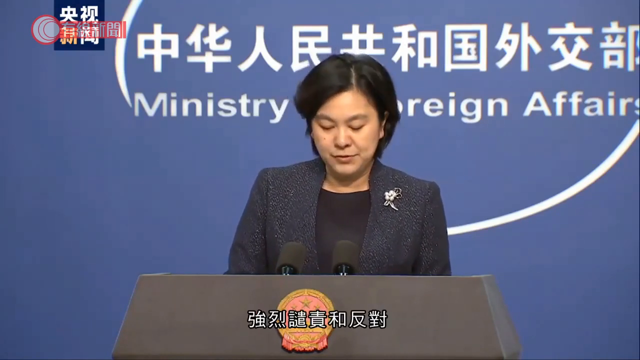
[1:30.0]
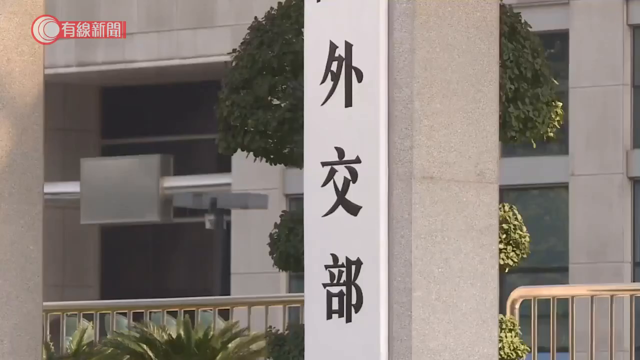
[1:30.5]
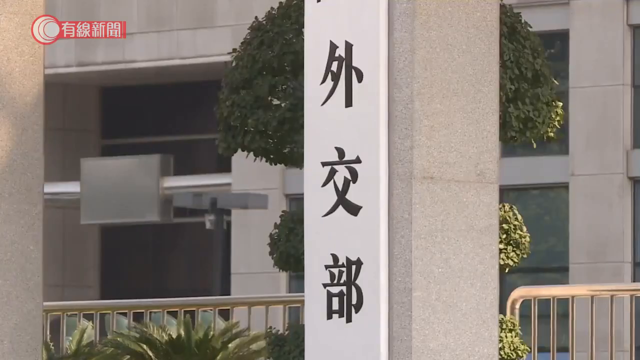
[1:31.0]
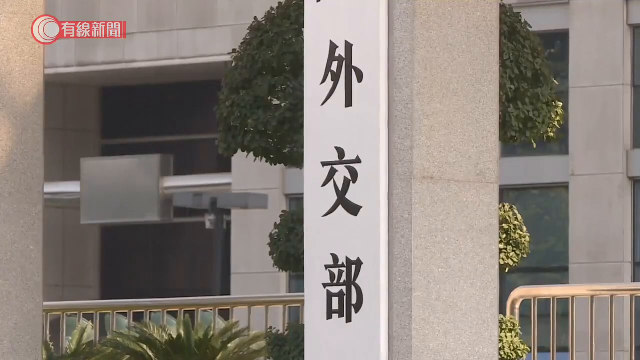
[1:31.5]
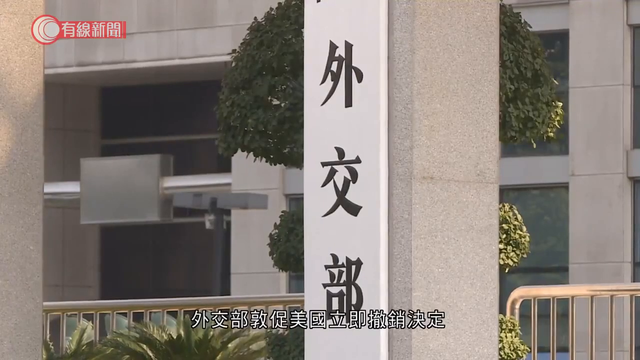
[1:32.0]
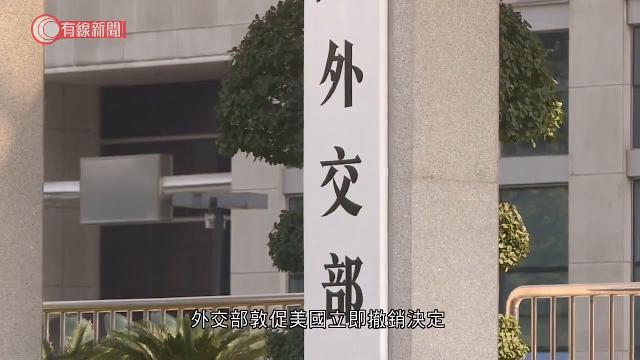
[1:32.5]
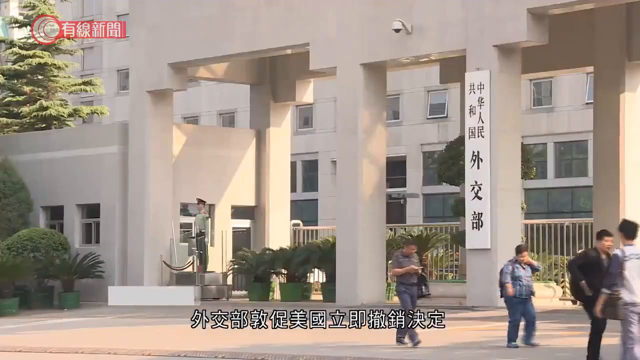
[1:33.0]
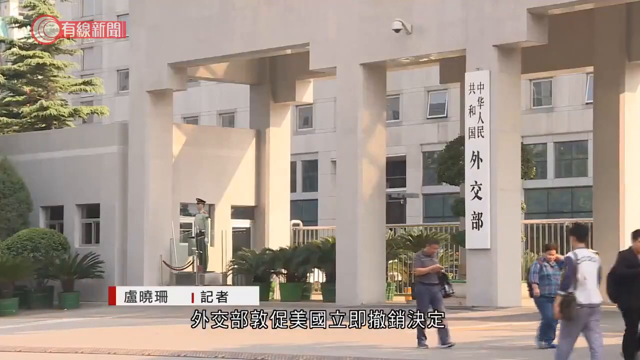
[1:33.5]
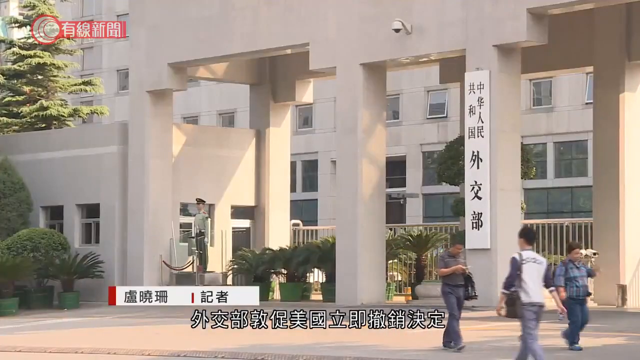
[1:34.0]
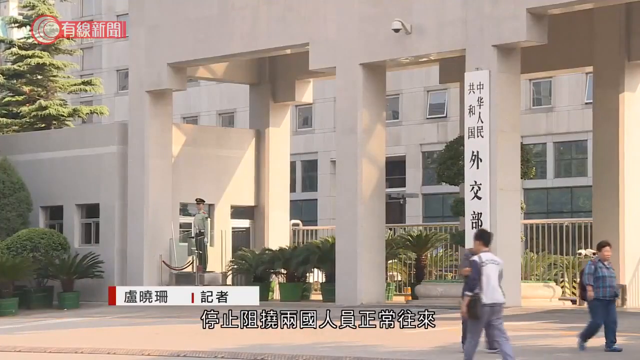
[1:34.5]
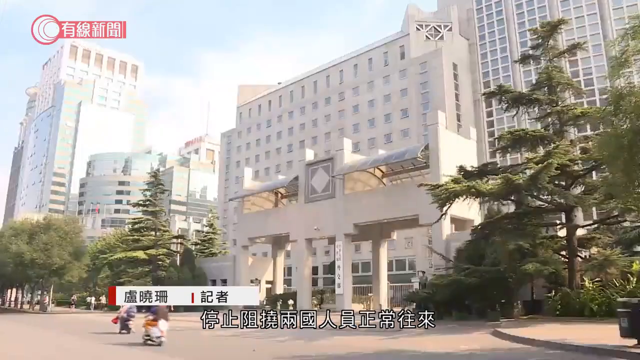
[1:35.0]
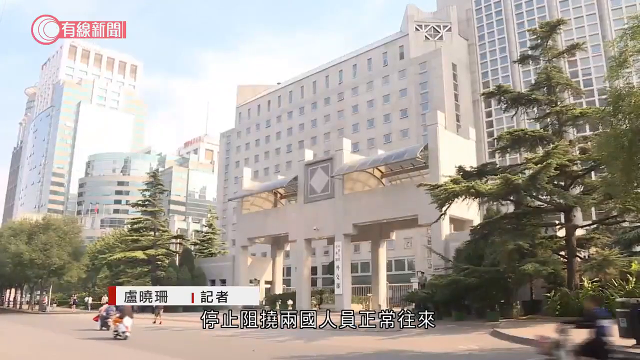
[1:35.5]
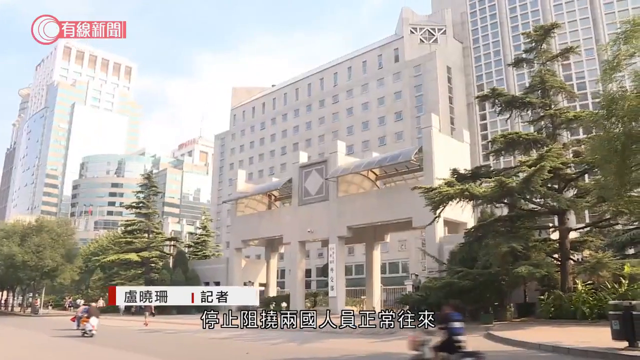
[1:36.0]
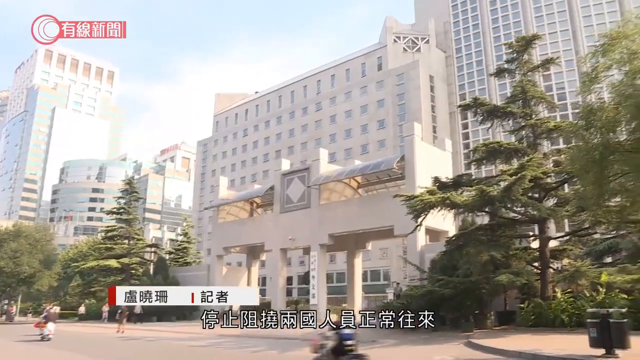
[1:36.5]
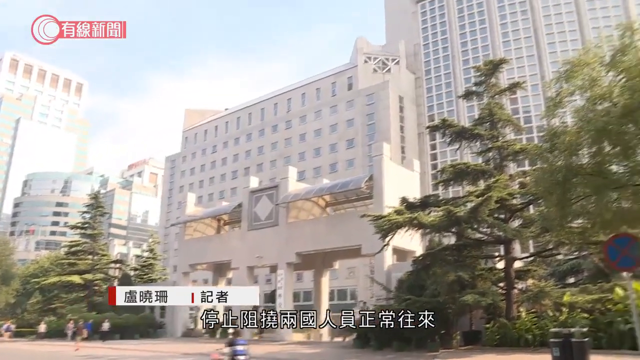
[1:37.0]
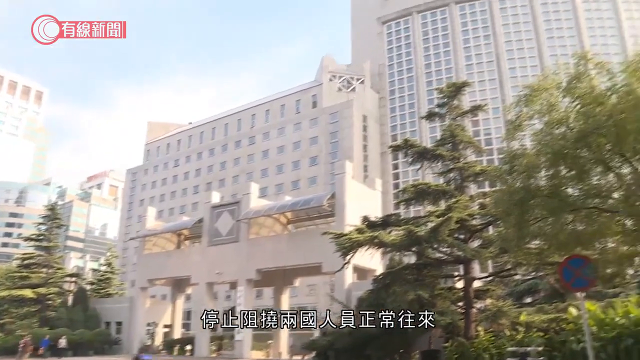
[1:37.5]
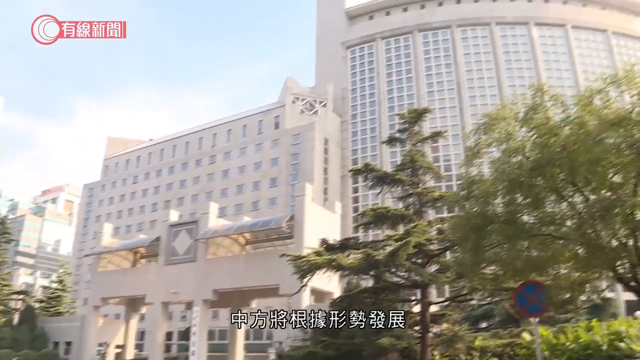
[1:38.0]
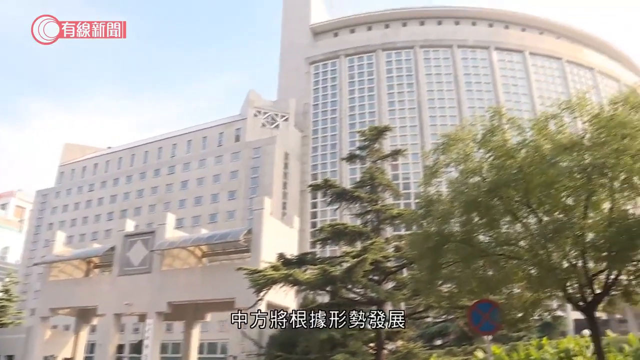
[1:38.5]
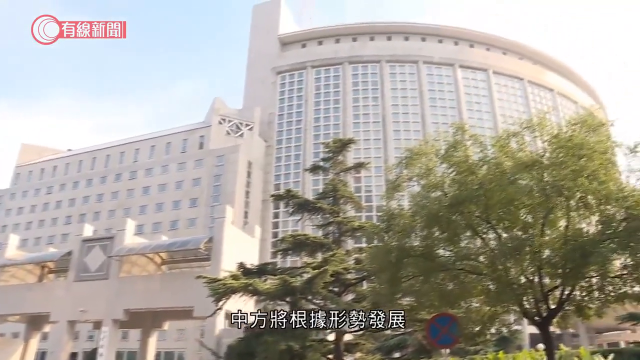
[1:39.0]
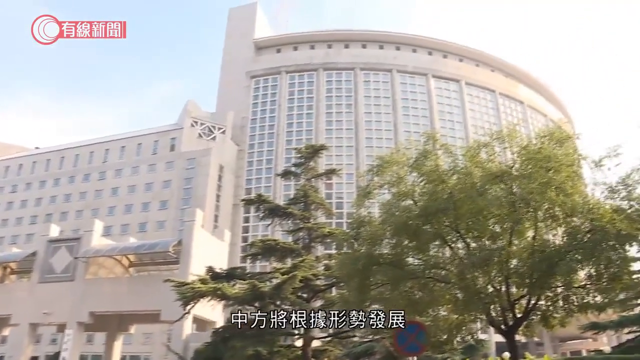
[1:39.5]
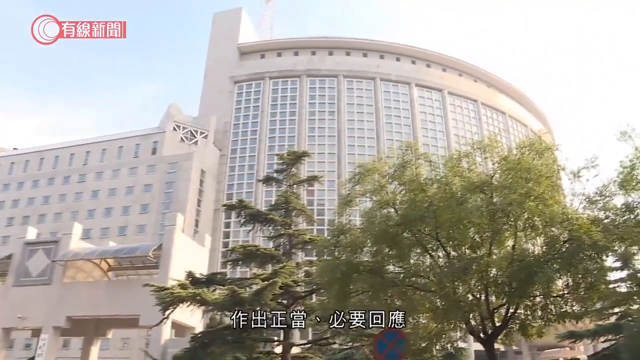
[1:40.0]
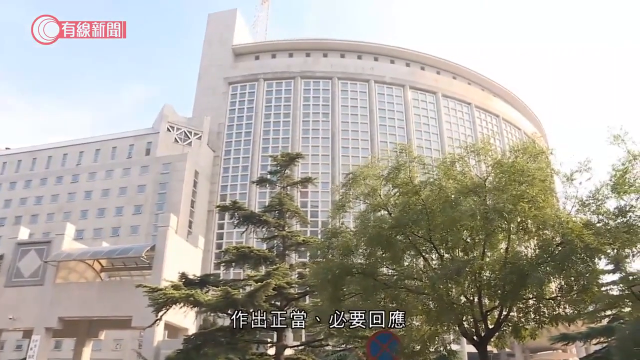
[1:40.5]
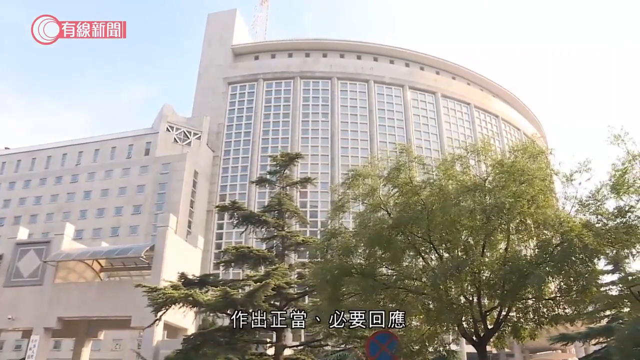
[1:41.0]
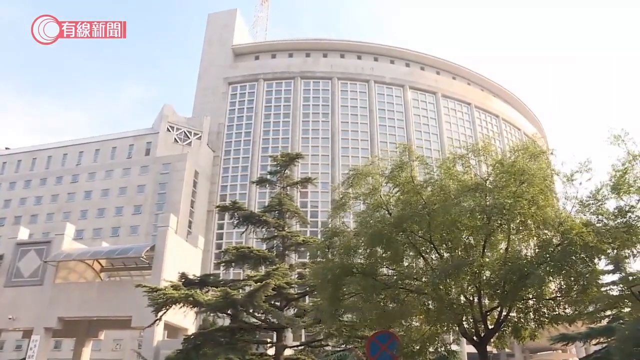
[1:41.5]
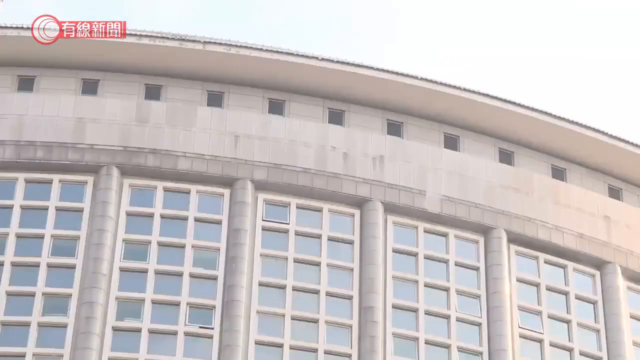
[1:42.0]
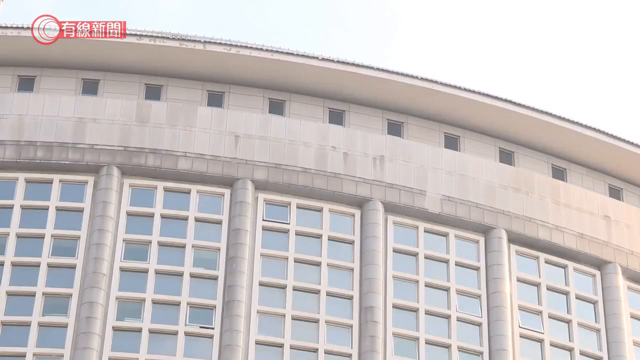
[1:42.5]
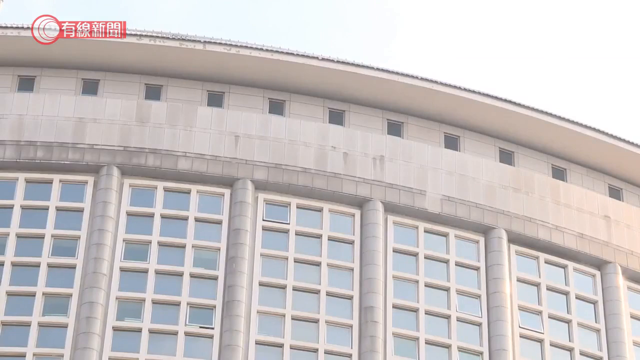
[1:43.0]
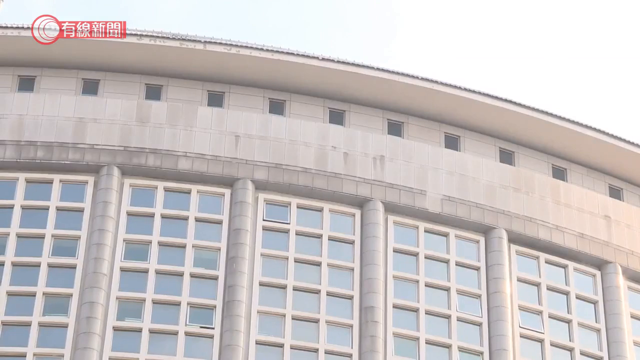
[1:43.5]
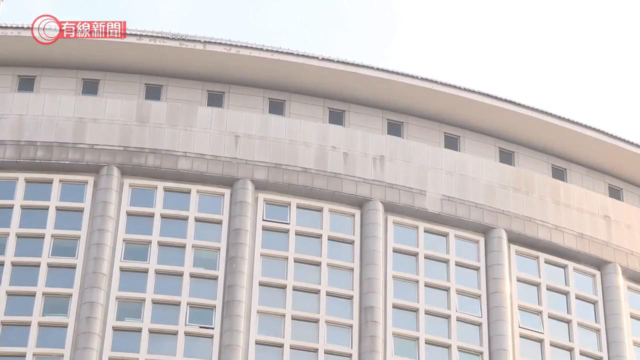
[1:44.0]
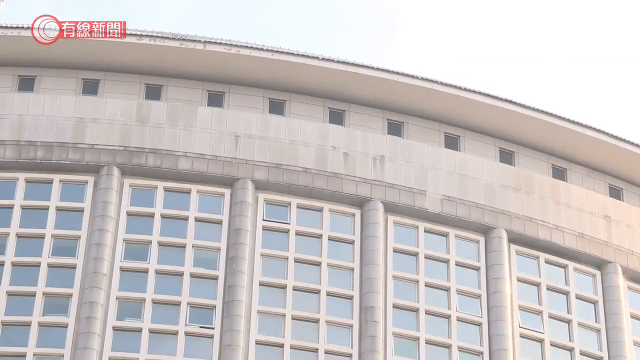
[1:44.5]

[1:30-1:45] A sign written in black letters on a white background in Chinese is on a building, with a tree right behind it and a silver railing visible in the image. The shot then backs off into a wider view of the building, which has a great many windows. A guard stands behind a red fabric rope that controls entry. The front of the building has very large pillars at its base, the front entrance area is flat, and to the right of the flat part is a curved section.